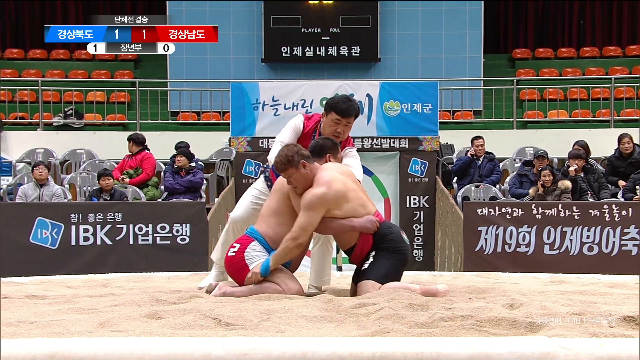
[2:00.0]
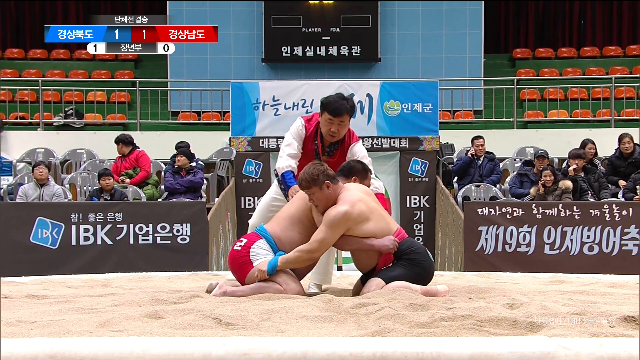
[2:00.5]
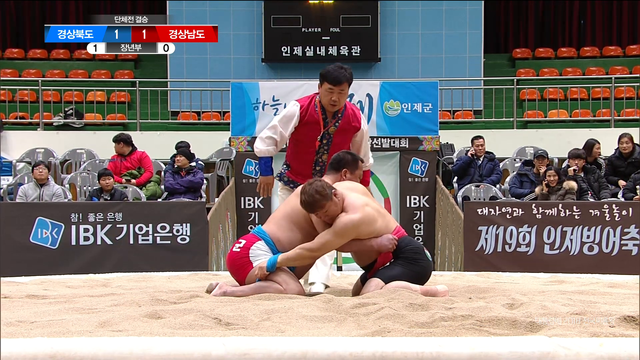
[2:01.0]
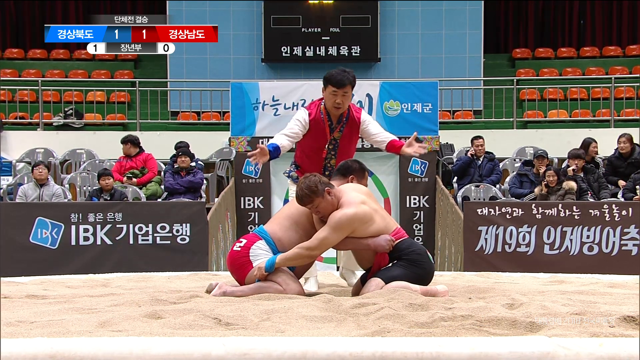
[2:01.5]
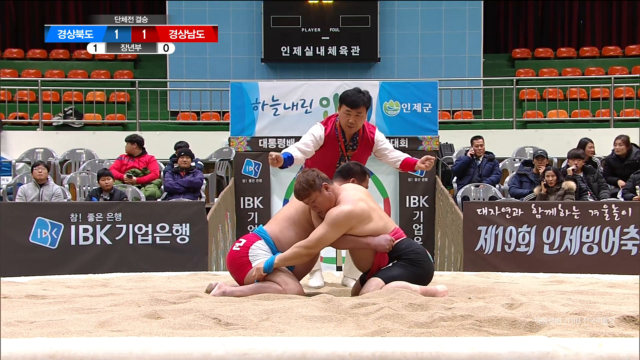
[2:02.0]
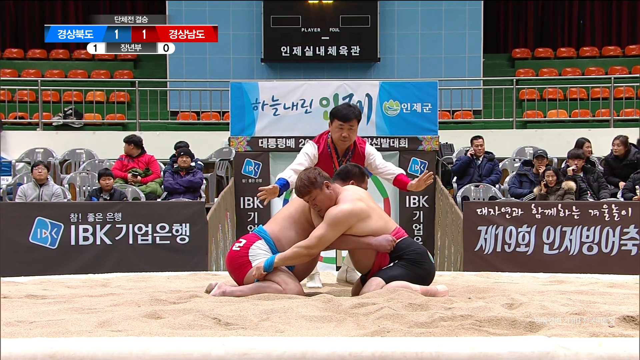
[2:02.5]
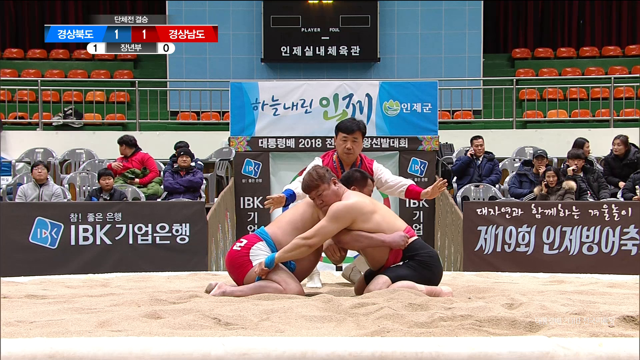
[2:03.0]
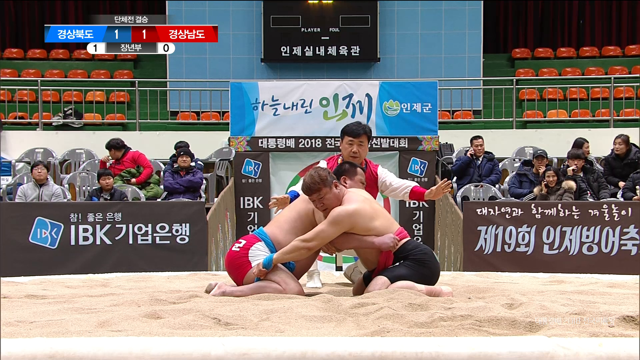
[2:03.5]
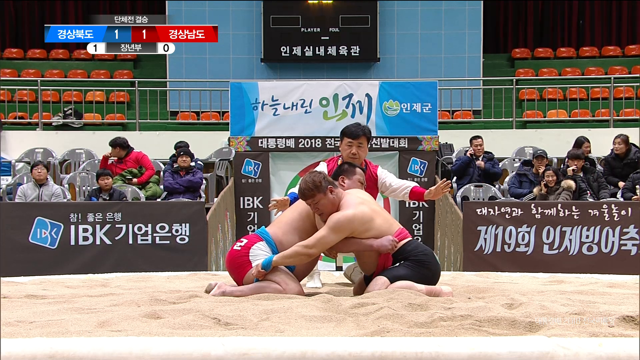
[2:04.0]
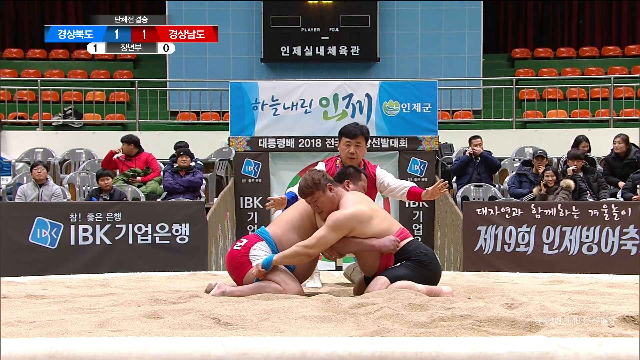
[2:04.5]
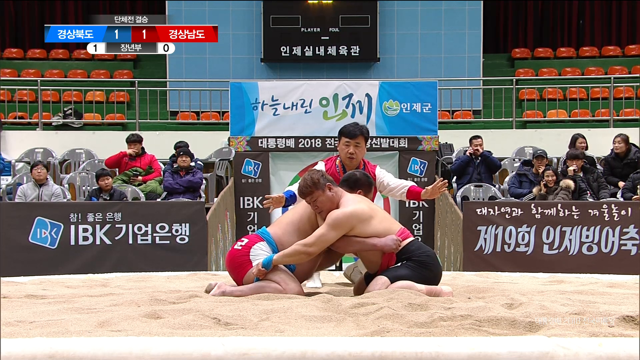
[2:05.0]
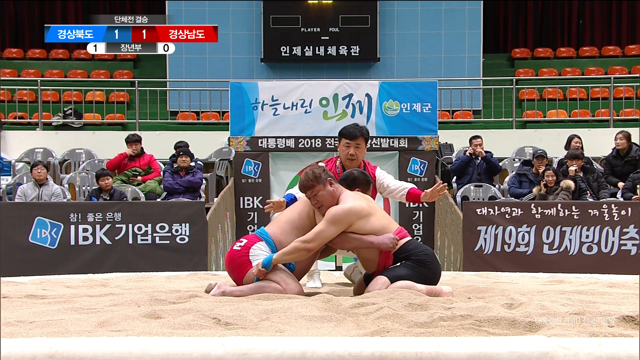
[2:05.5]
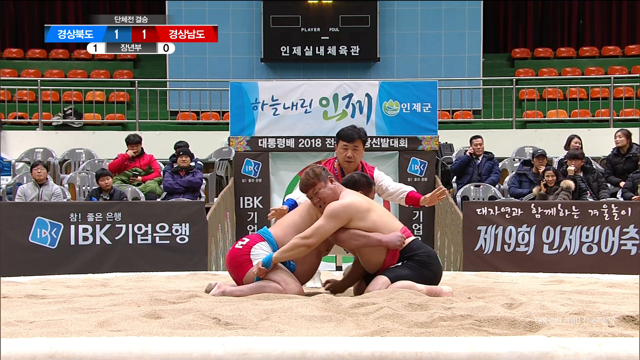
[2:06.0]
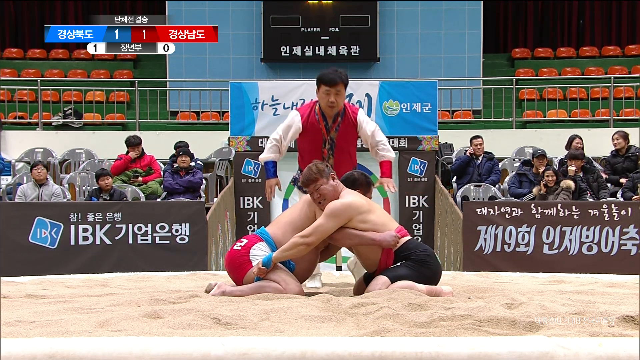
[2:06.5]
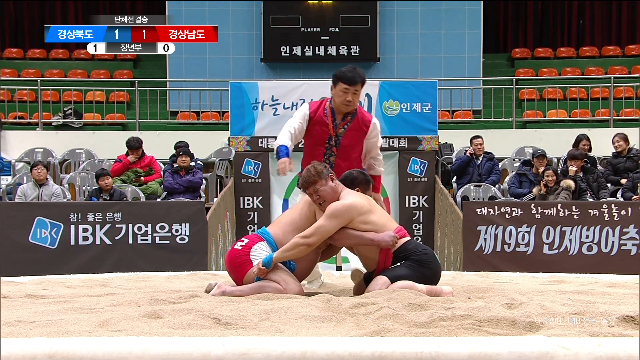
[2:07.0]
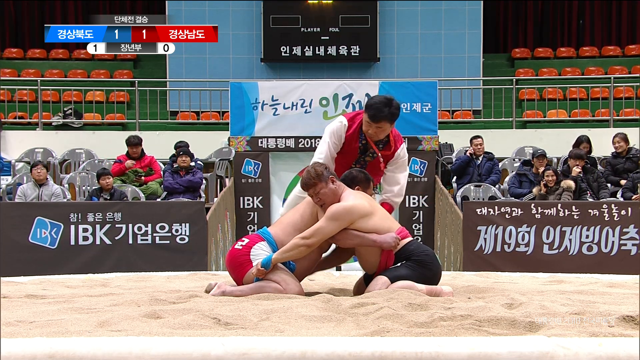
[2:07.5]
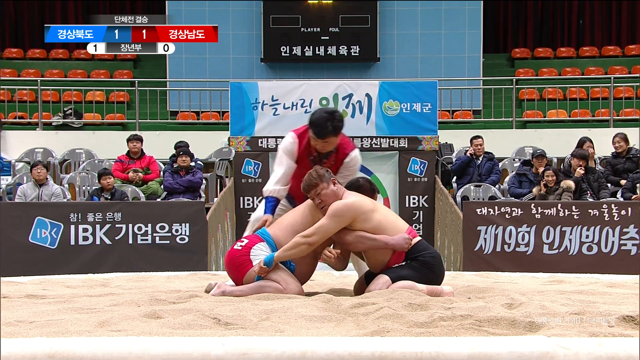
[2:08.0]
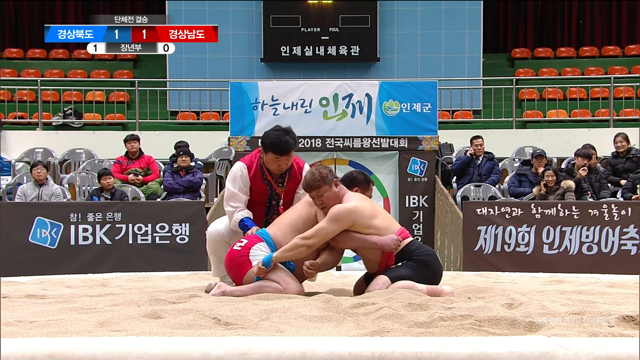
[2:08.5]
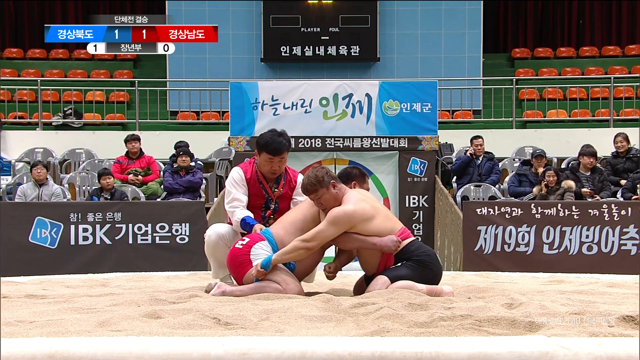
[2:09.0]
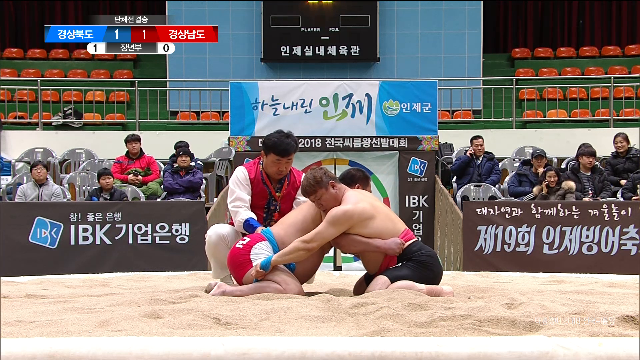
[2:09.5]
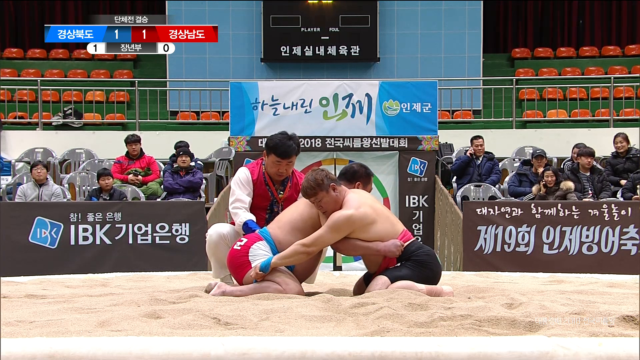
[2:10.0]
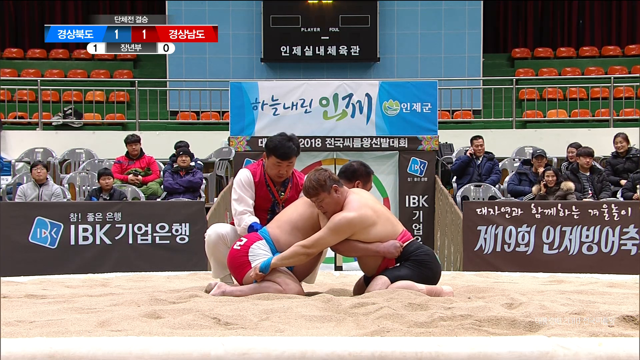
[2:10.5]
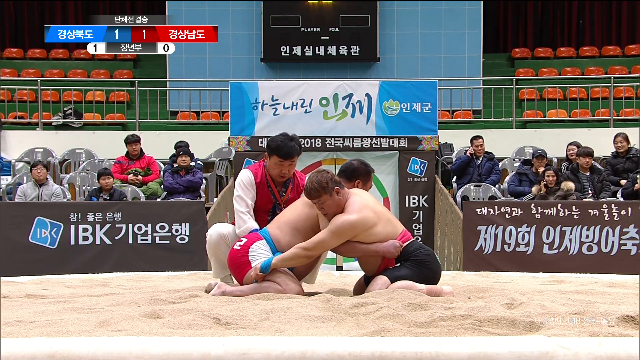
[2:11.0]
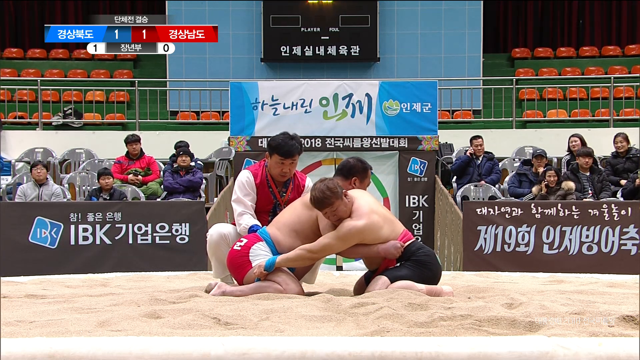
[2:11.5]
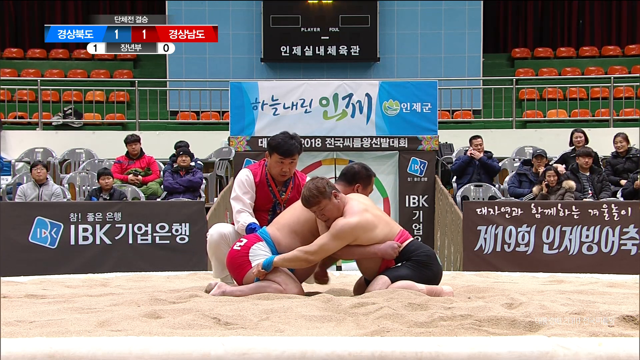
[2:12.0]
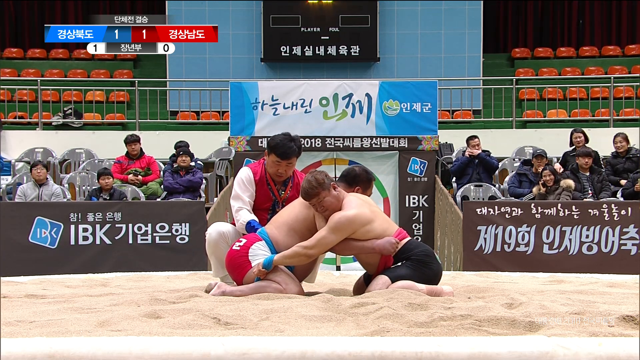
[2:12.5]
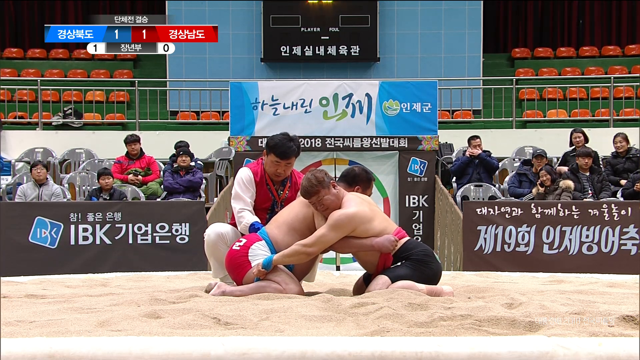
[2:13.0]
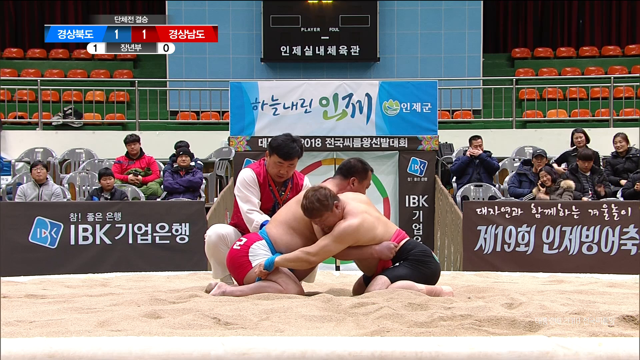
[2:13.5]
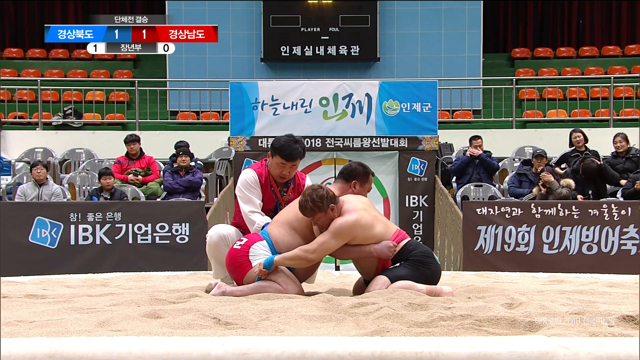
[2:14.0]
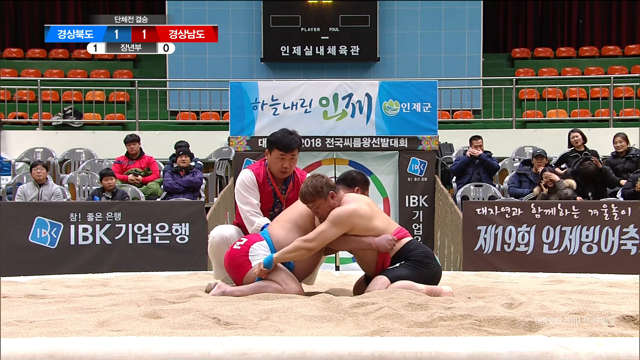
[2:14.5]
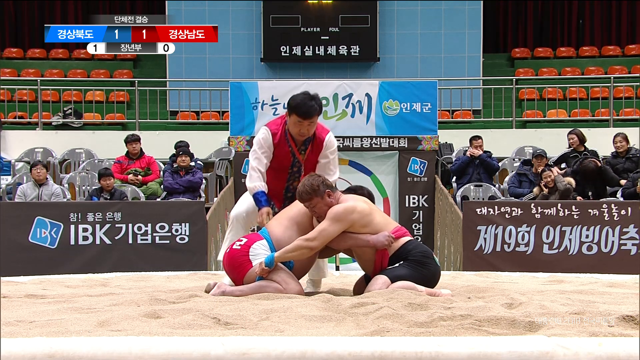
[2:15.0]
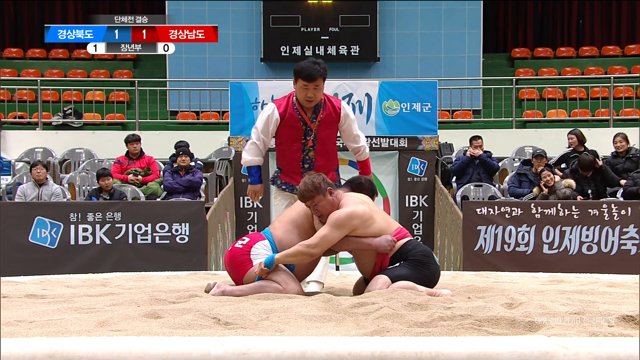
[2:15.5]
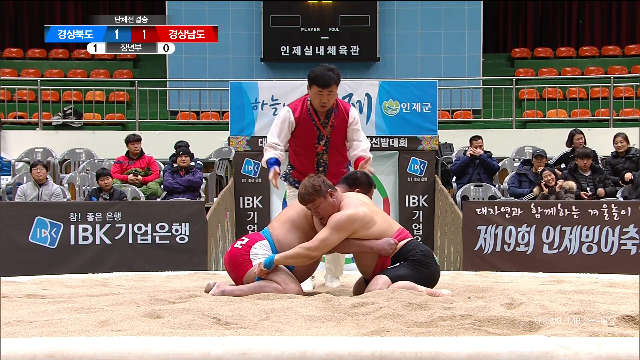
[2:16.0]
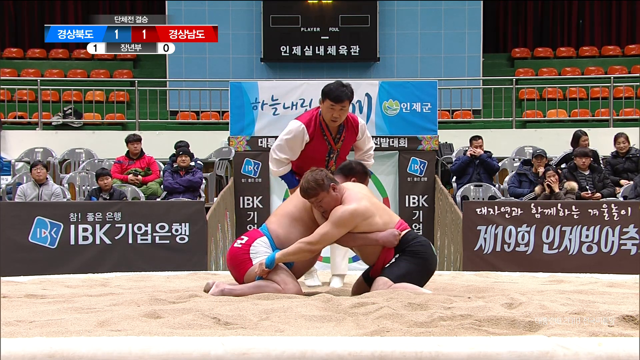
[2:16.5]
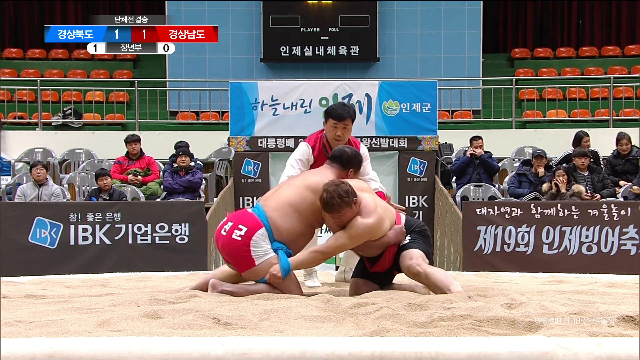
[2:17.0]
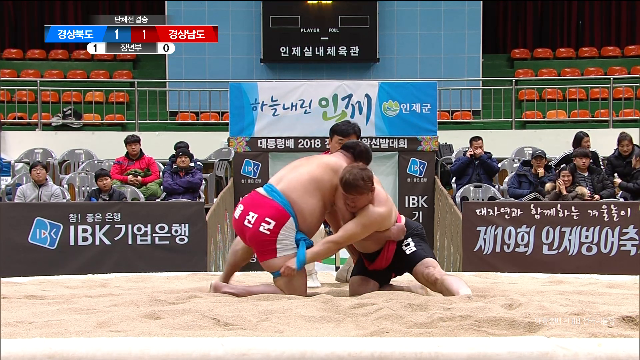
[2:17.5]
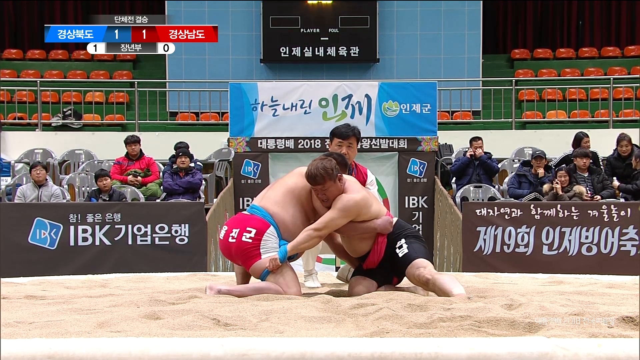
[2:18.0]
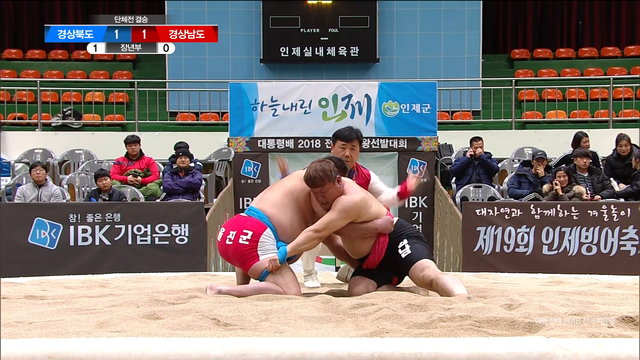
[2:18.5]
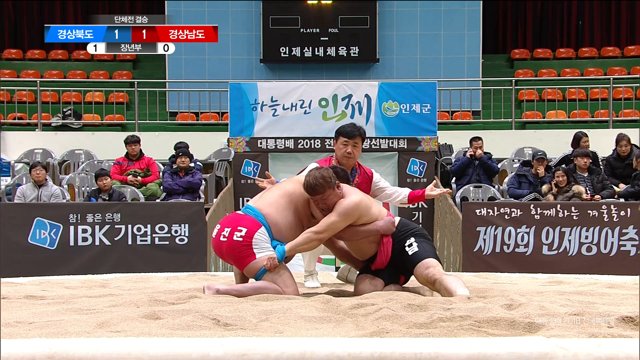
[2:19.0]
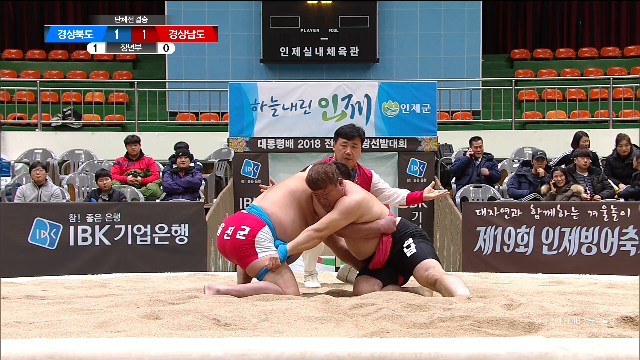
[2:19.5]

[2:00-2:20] The men start getting positioned, digging their knees into the sand to get a good stance. The referee stands with his arms outstretched, getting ready to give them the signal to go. The referee checks on the wrestler with the blue sash around his waist and looks like he is making an adjustment before the match can begin. In the background, several spectators sit in gray plastic chairs watching, two of them on their cell phones. On the level up behind them there is another level of chairs with nobody sitting there. There are green stands with orange chairs. The wrestlers begin and struggle to get to their feet, each with one knee and one foot on the ground, pushing against each other while trying to get up.